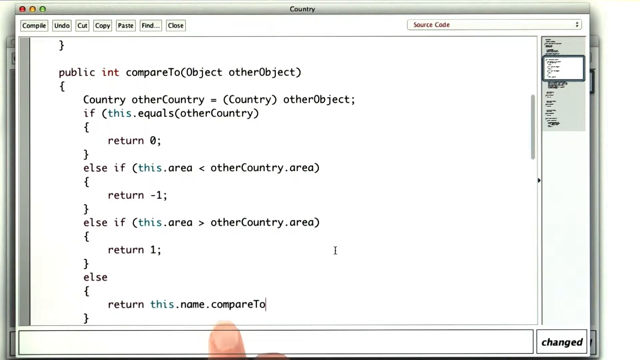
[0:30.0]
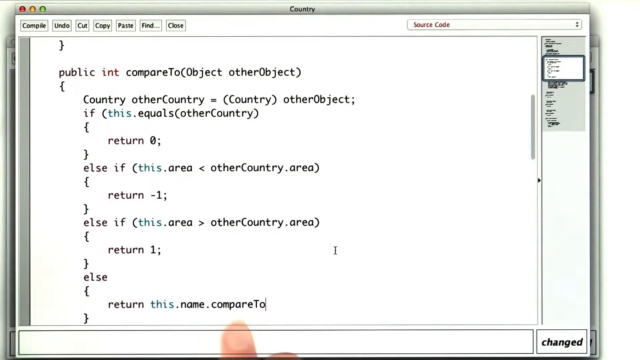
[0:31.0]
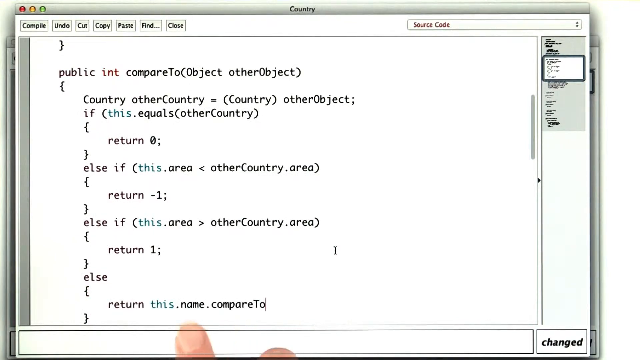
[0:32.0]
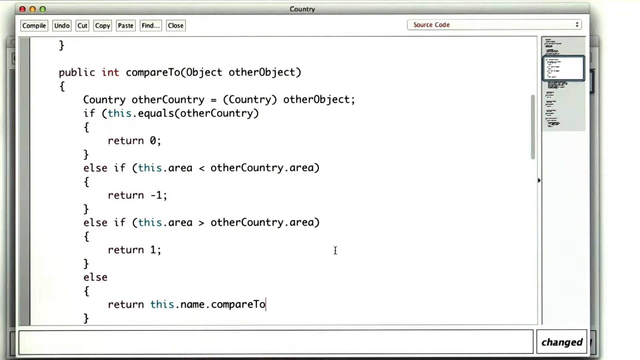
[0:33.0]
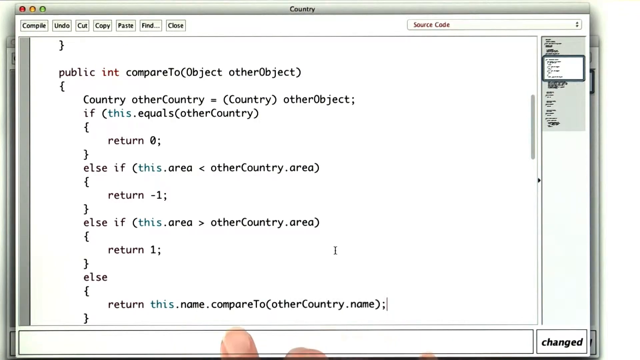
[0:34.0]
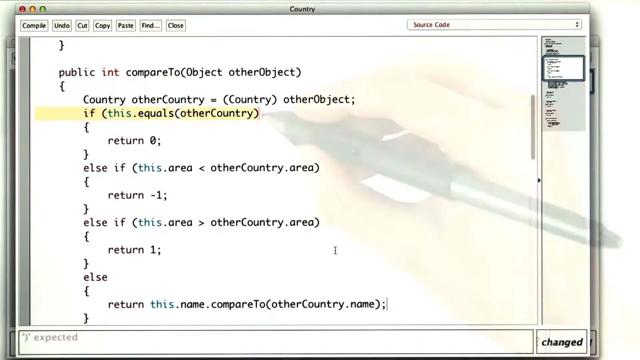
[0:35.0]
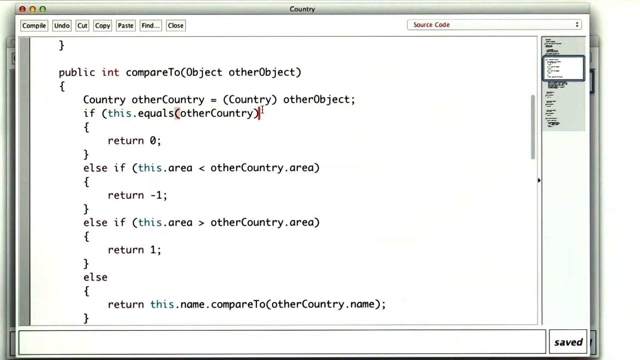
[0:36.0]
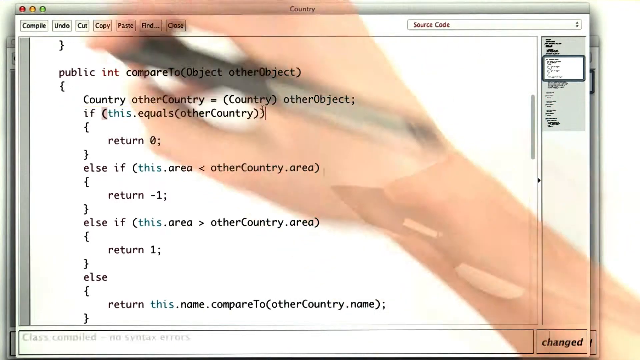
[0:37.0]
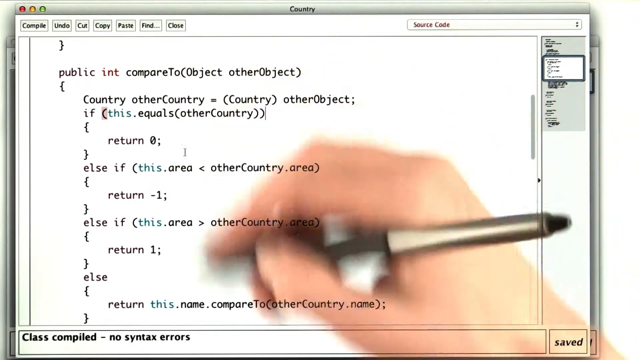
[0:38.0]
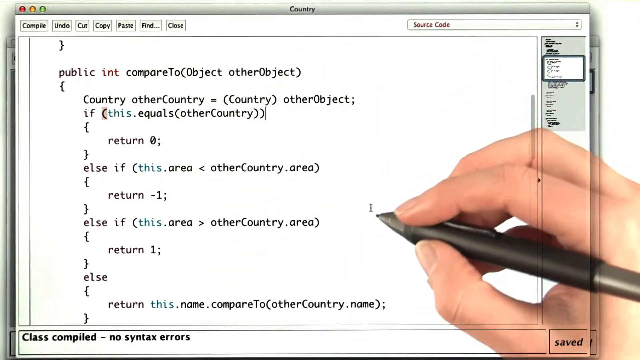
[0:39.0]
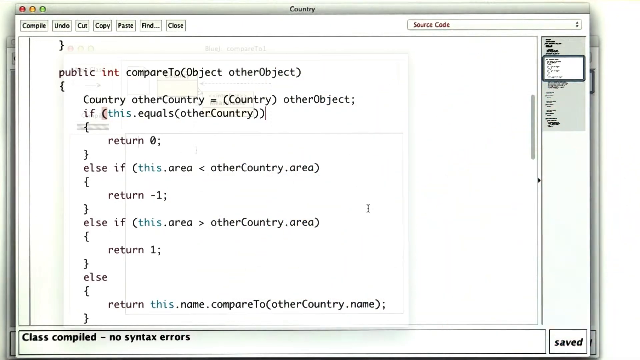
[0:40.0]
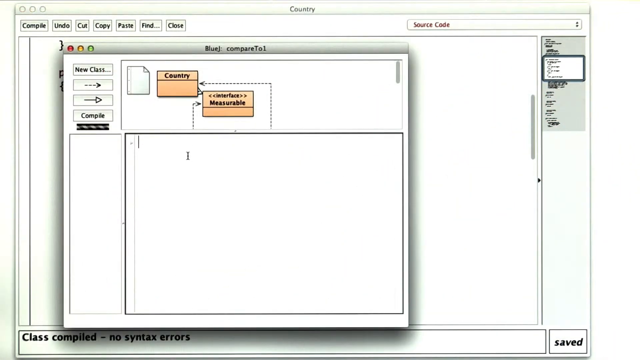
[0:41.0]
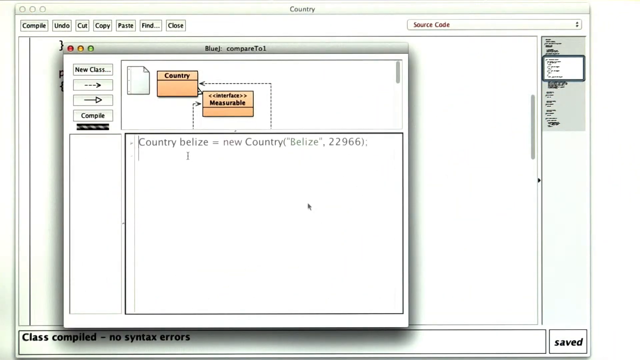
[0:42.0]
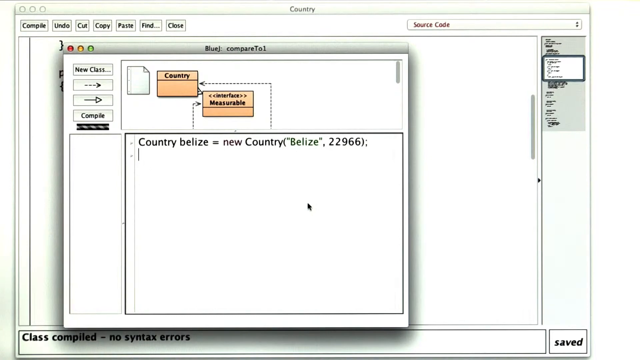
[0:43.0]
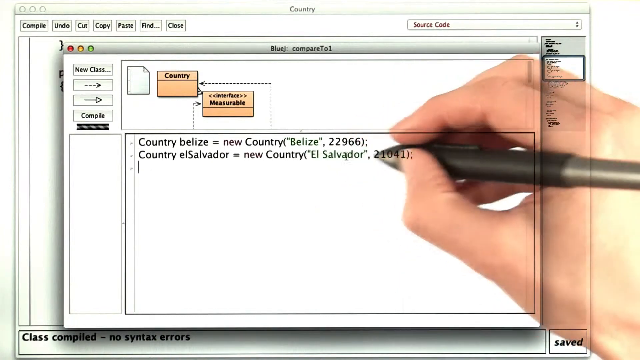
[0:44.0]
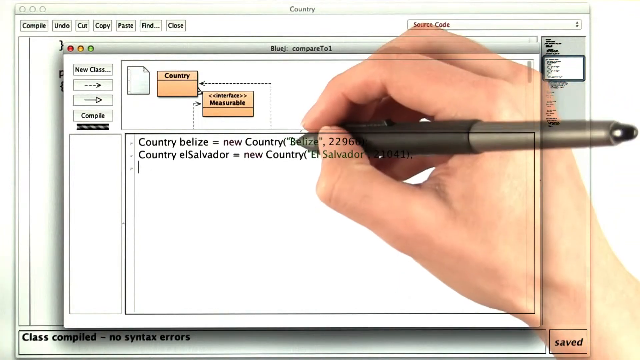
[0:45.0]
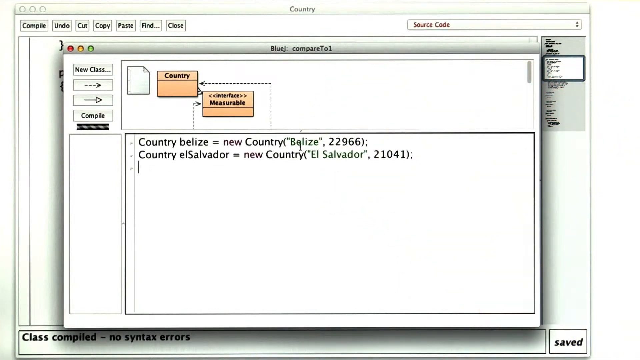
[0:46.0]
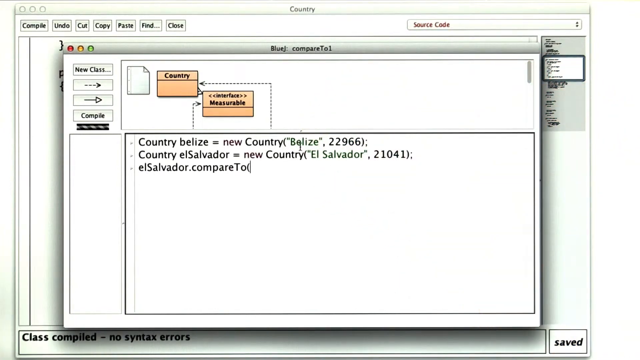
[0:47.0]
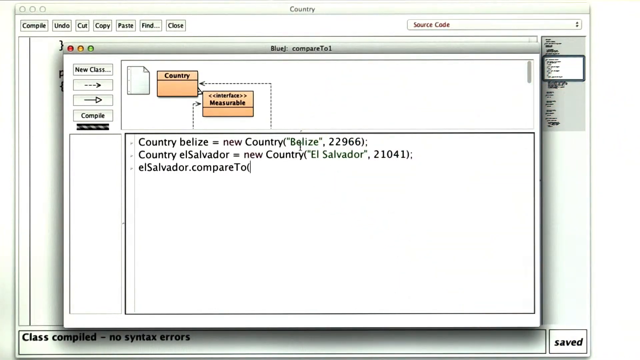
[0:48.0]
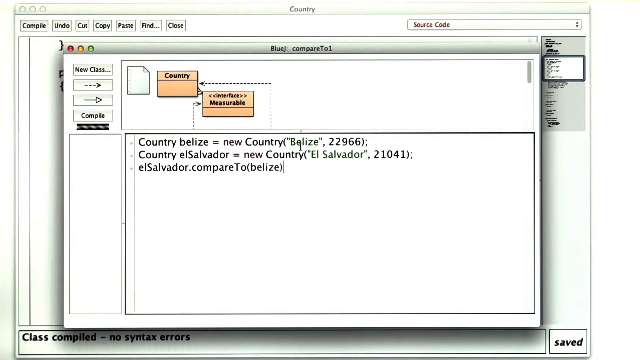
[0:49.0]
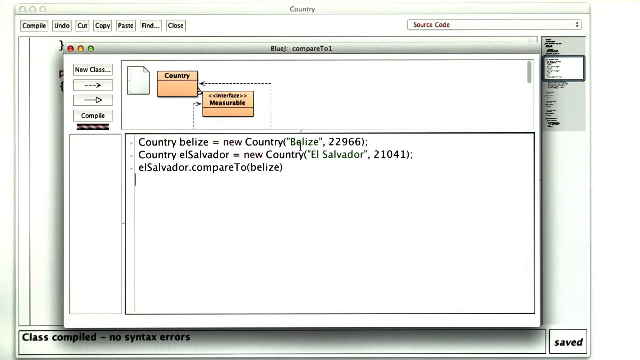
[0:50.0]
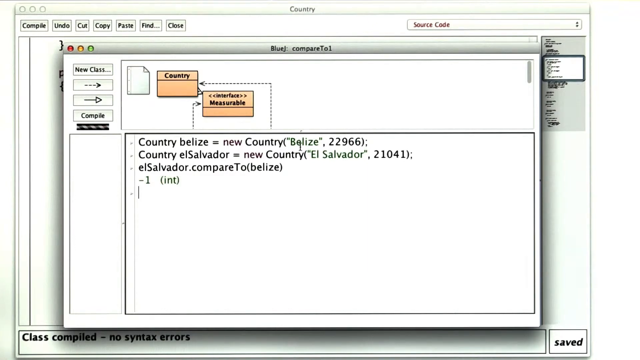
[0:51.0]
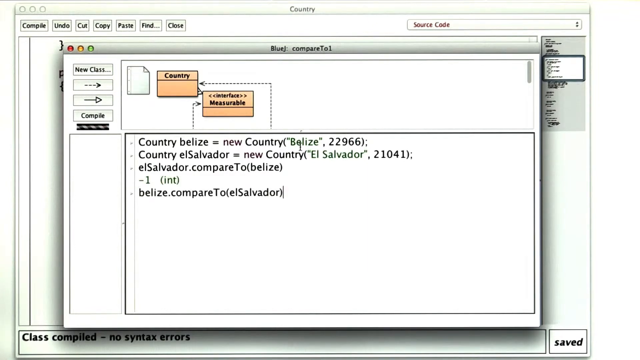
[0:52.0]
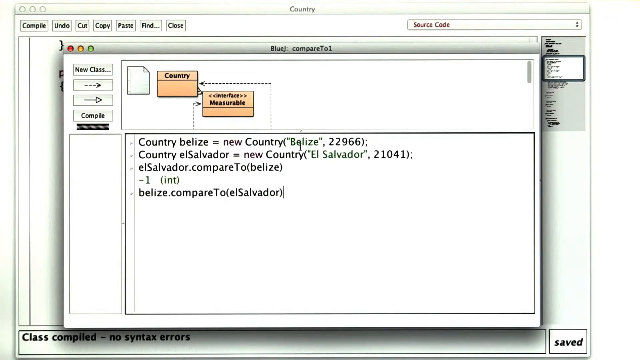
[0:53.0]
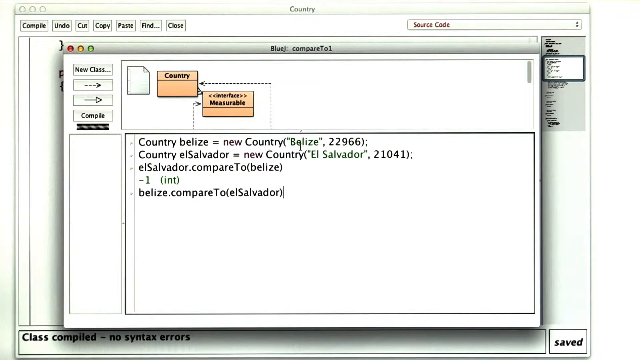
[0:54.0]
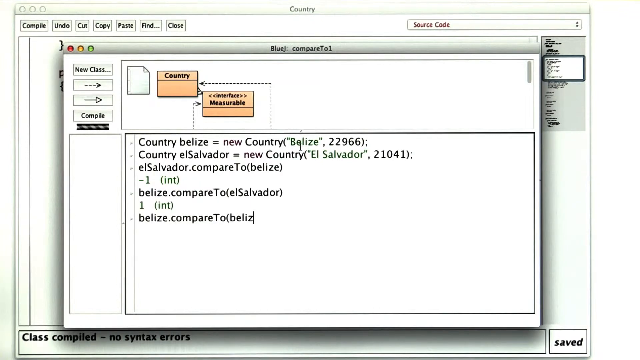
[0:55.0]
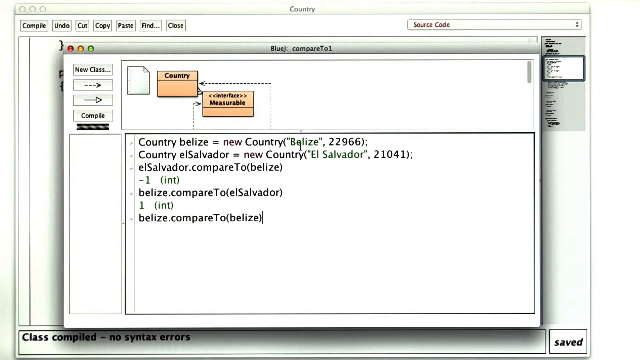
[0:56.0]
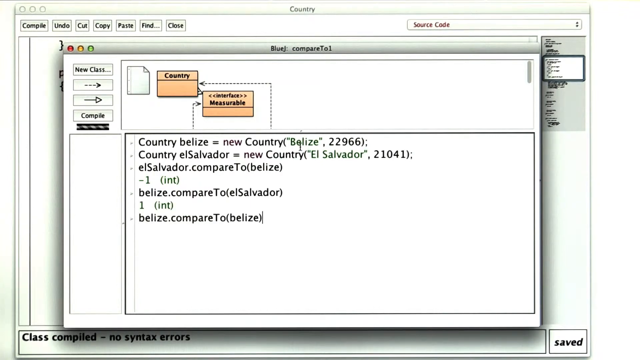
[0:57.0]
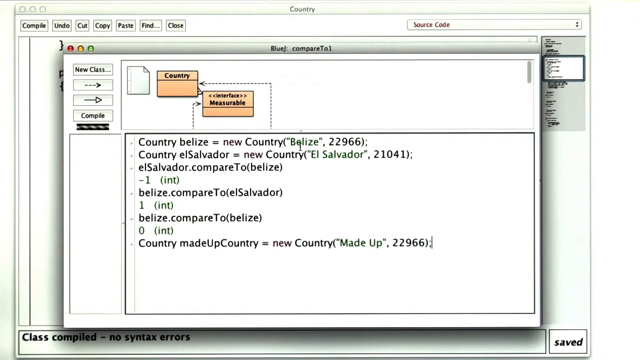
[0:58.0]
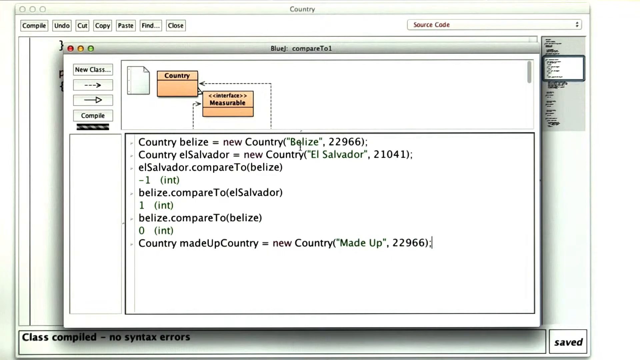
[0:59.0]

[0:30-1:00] A person is editing code, moving between different applications and using the pen and their hand to edit the code more often and with more tools. They edit the code and apply its next sections. The code on the computer screen, the hand and the pen are the only real subjects; everything else is digital. There is only one person and one hand. The code becomes more mature, and the hand moves more sporadically. The code has something to do with countries.